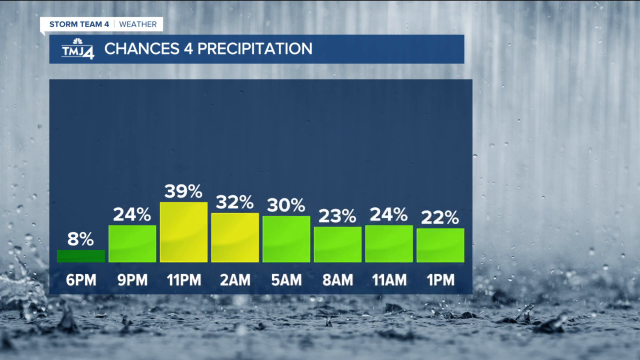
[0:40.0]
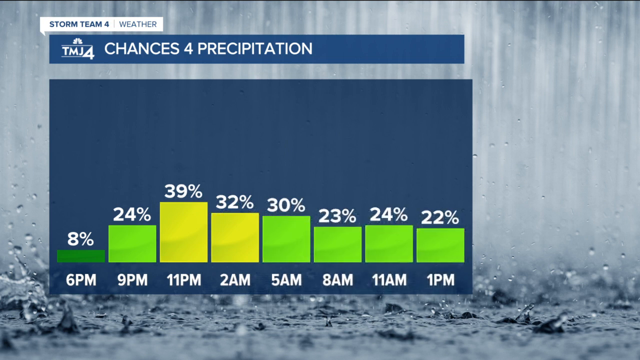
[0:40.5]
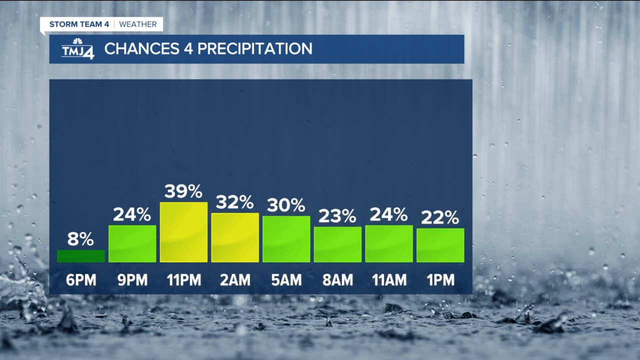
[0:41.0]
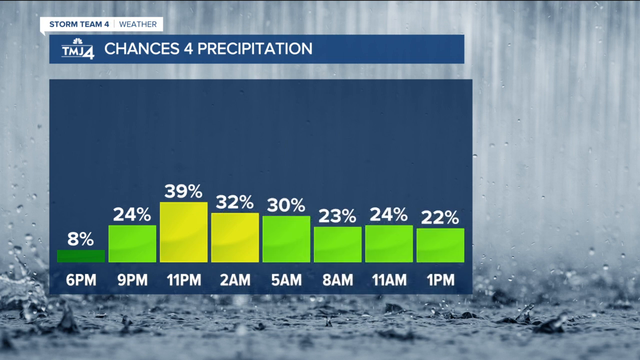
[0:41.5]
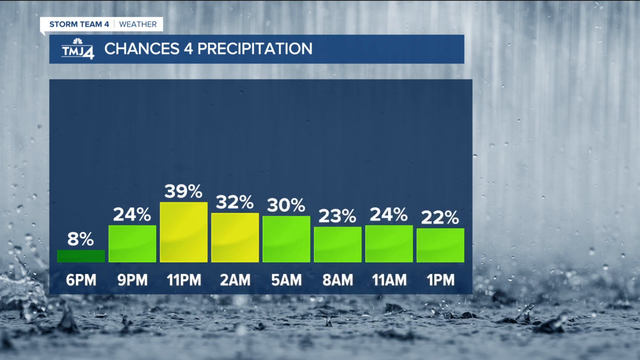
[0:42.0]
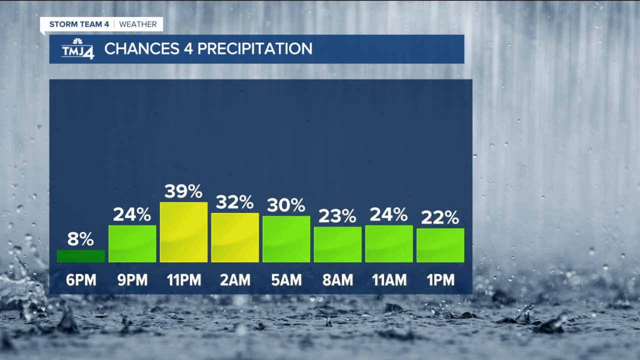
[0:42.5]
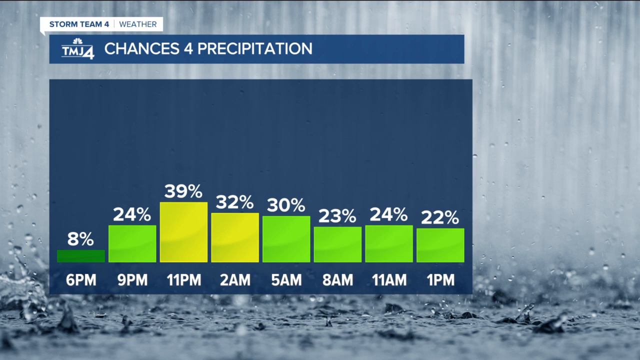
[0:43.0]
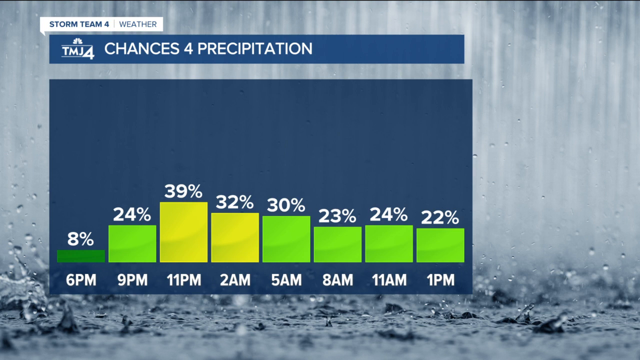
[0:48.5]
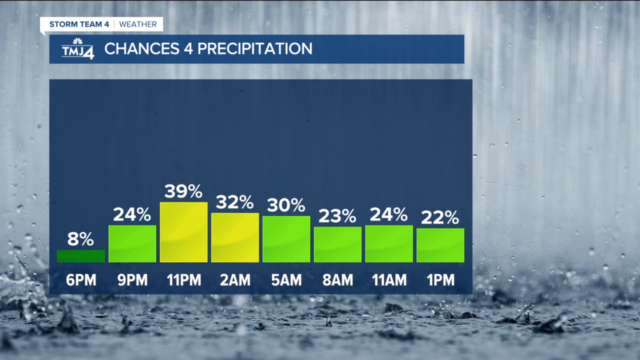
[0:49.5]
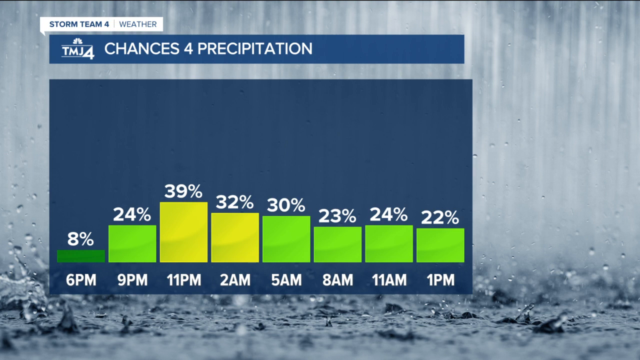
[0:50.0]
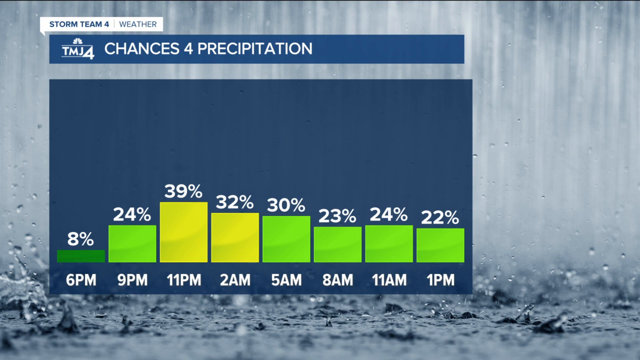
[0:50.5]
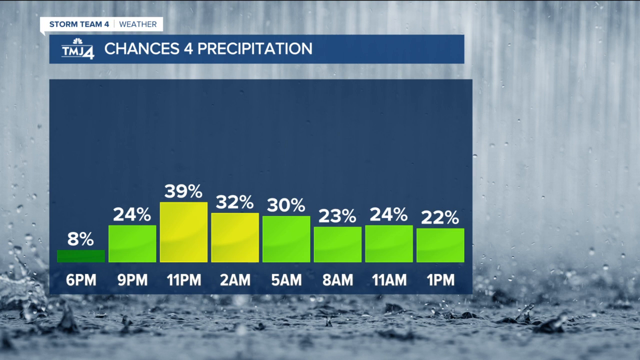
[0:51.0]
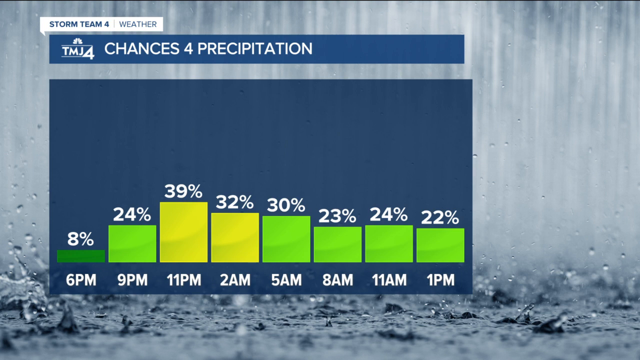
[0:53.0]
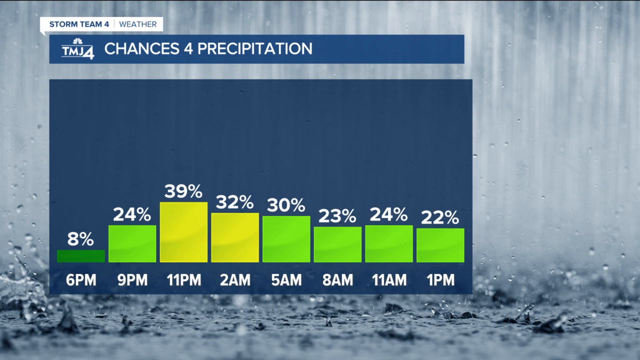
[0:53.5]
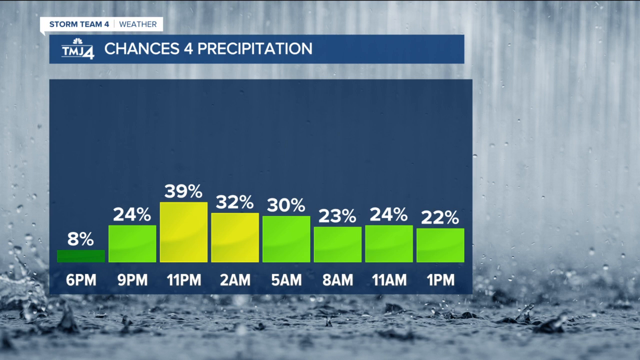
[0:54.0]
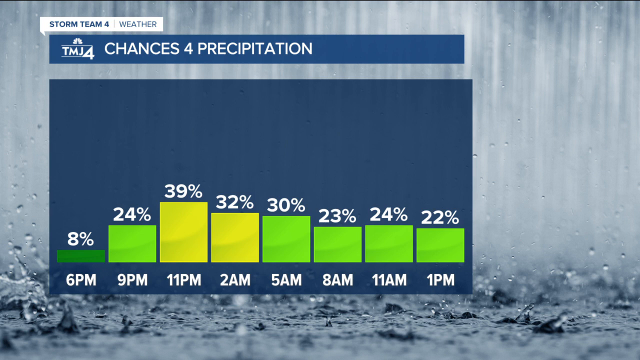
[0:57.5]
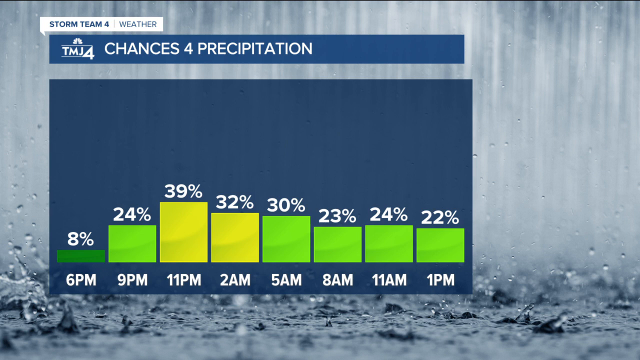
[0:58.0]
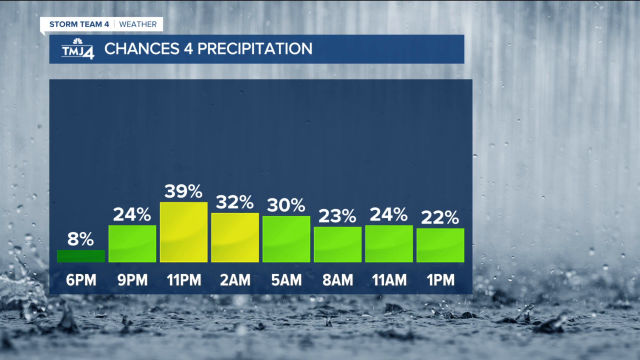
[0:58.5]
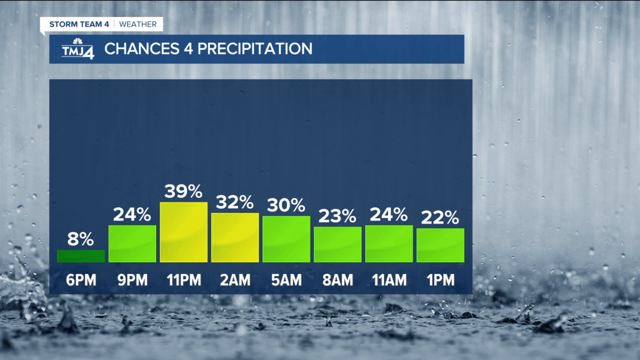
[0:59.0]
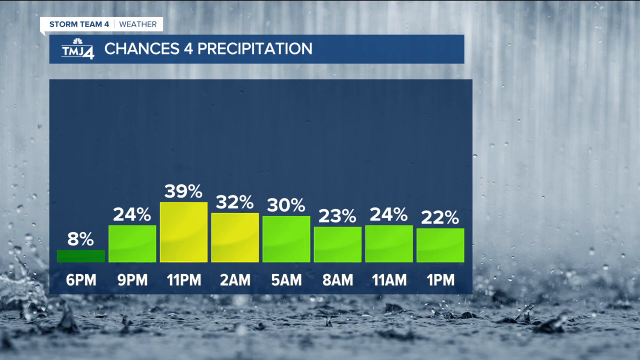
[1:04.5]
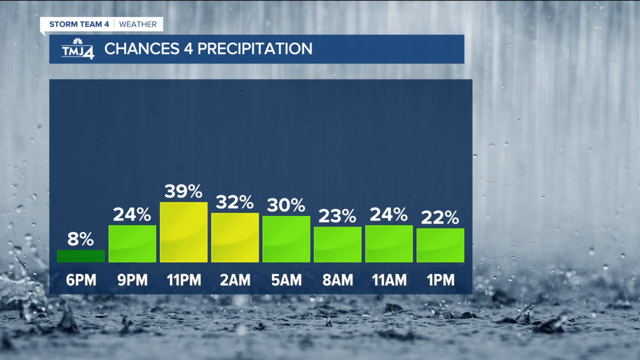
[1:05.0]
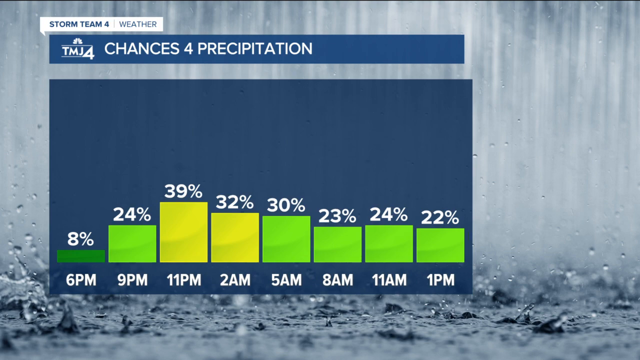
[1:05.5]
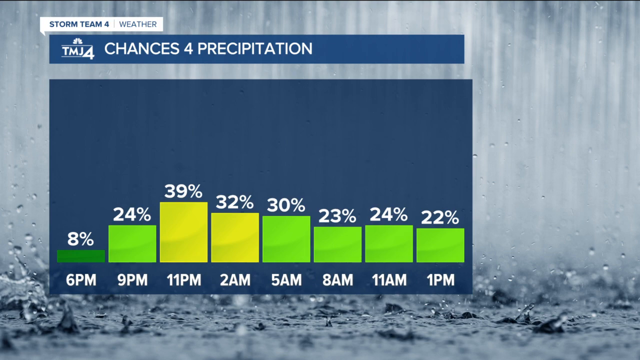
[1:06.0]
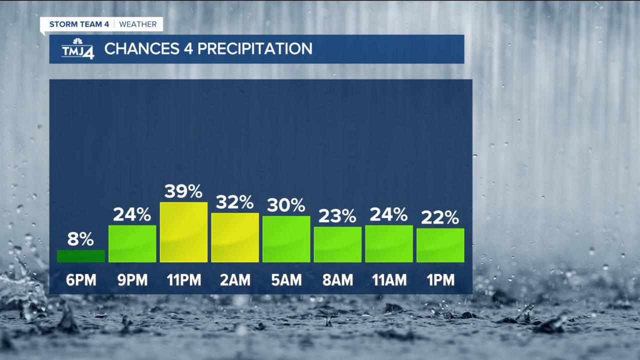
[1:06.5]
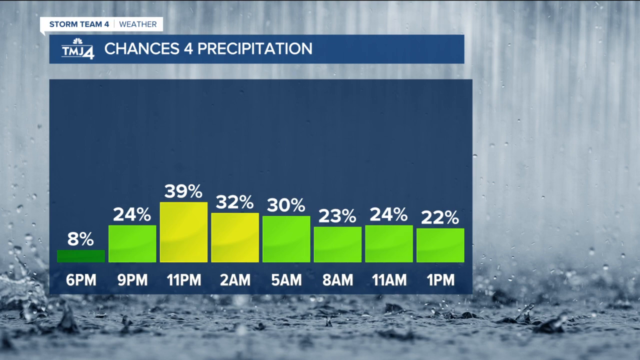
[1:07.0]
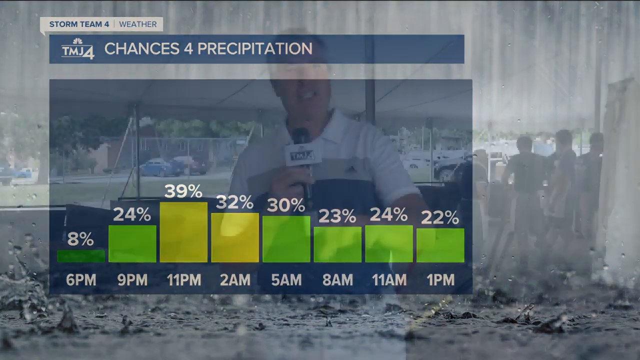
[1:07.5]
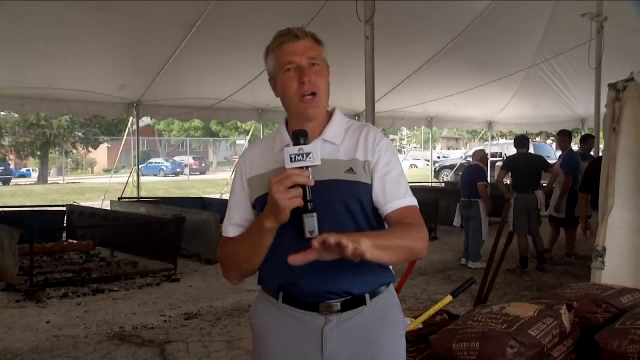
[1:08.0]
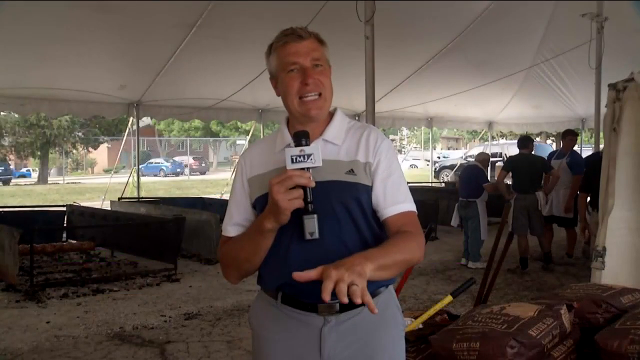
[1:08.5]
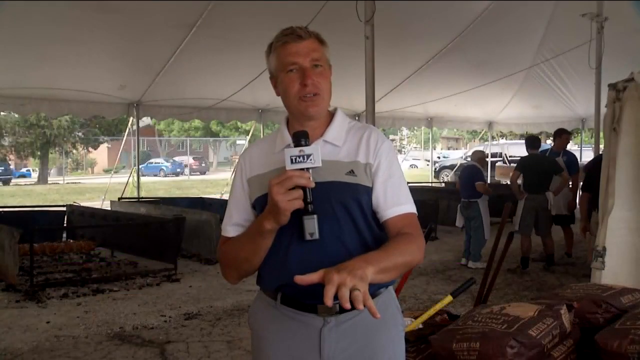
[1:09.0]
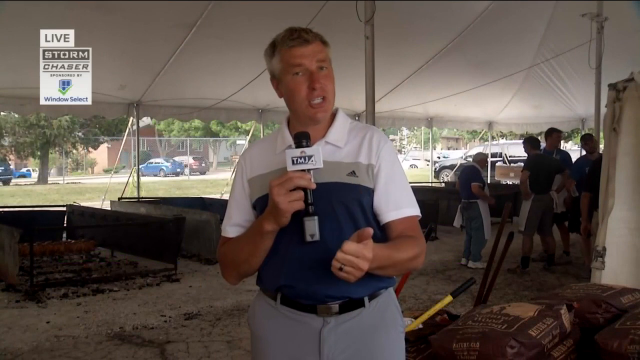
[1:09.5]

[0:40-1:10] The bar chart of "chances for precipitation" continues over a background of water splashing on the floor. The lowest value is 8% in dark green and the highest is 39% in yellow. 6 p.m. shows 8% with a dark green bar, 9 p.m. shows 24% in light green, 11 p.m. shows 39% with a yellow bar, 2 a.m. shows 32% also in yellow, 5 a.m. shows 30% in light green, 8 a.m. shows 23% in light green, 11 a.m. shows 24% in light green, and 1 p.m. shows 22%.